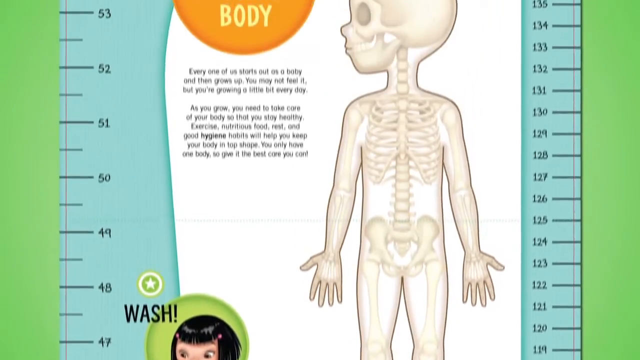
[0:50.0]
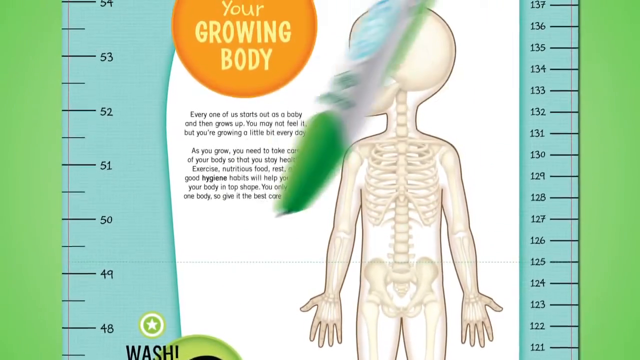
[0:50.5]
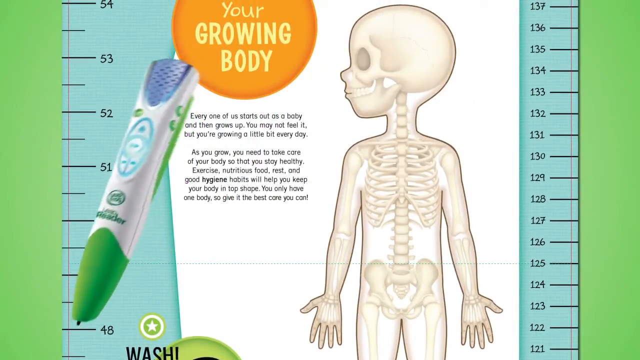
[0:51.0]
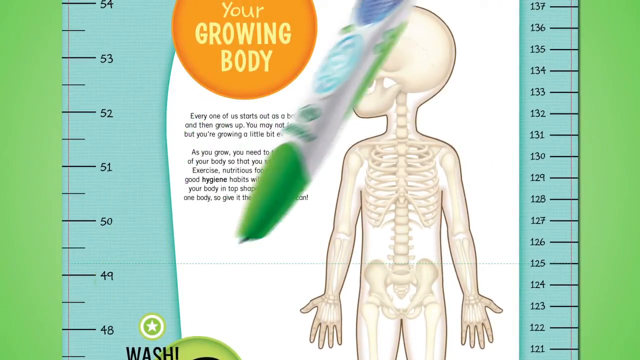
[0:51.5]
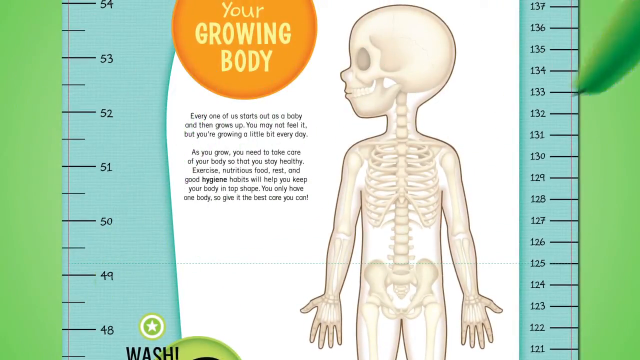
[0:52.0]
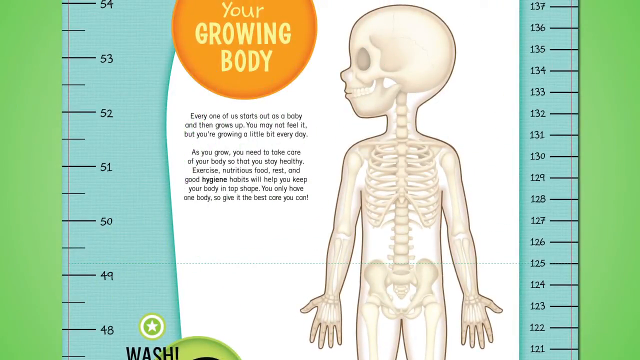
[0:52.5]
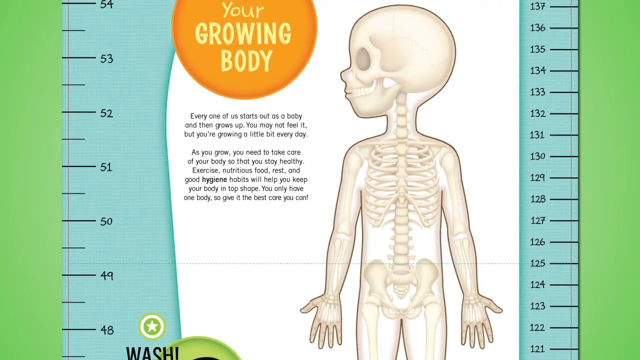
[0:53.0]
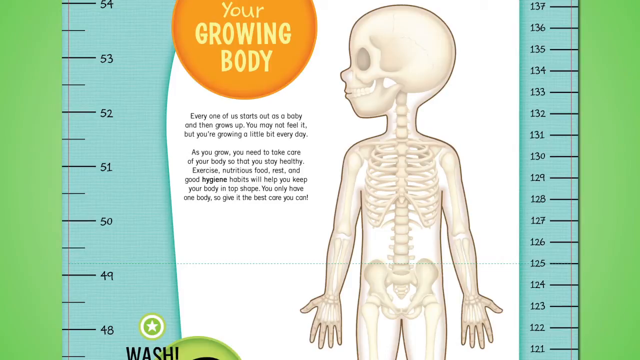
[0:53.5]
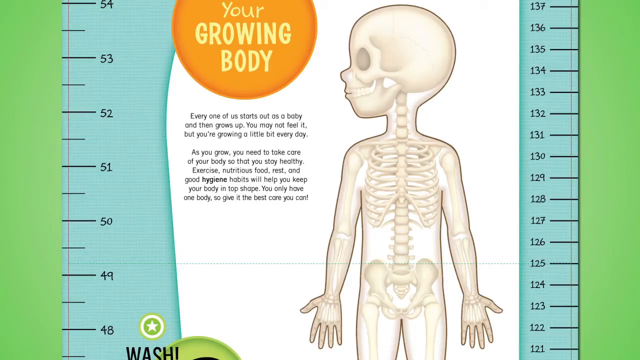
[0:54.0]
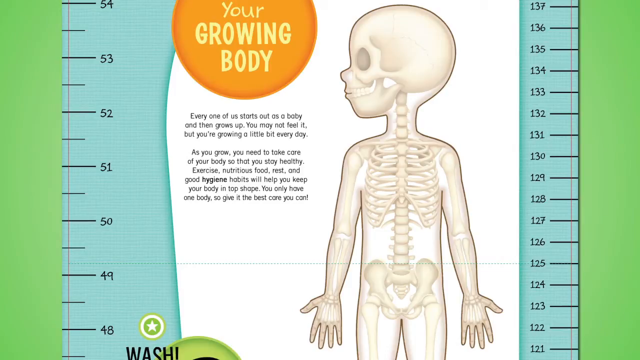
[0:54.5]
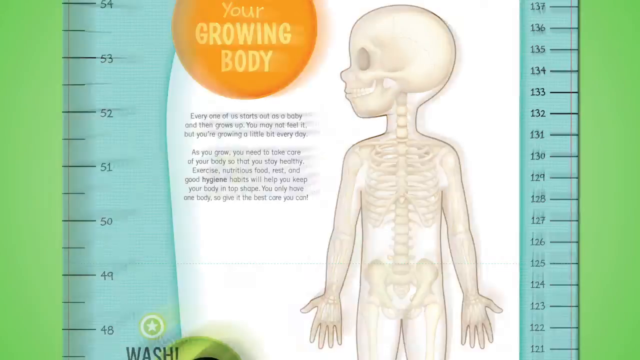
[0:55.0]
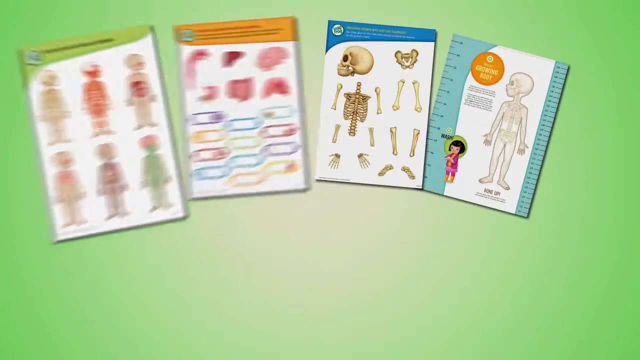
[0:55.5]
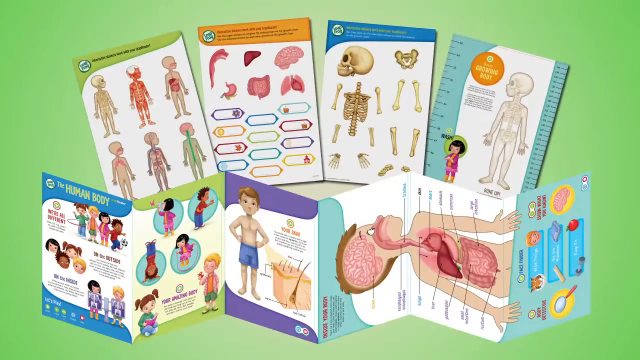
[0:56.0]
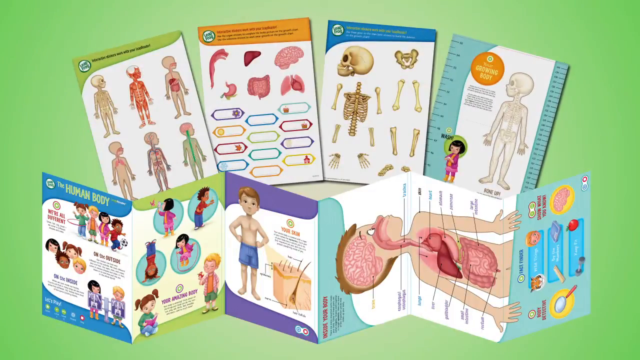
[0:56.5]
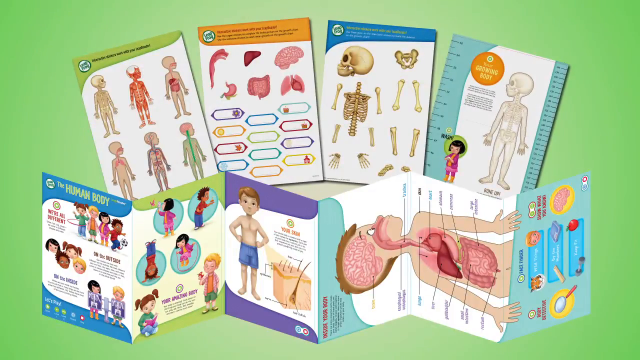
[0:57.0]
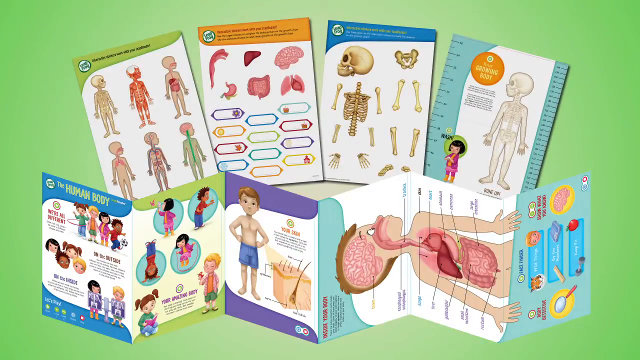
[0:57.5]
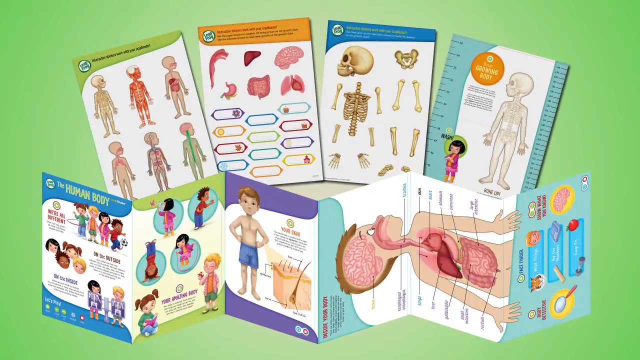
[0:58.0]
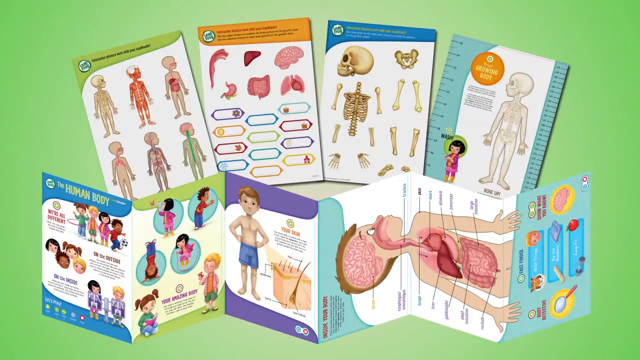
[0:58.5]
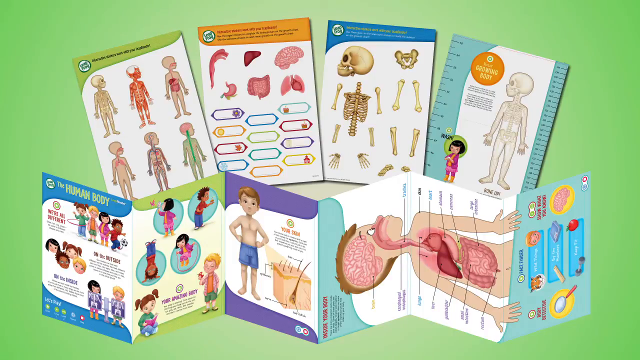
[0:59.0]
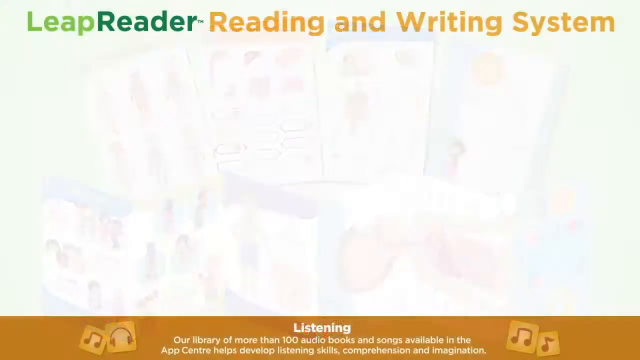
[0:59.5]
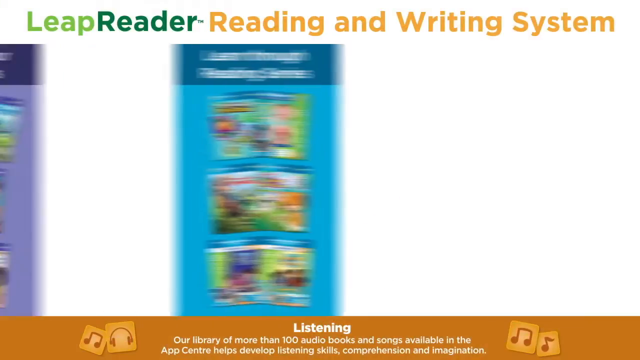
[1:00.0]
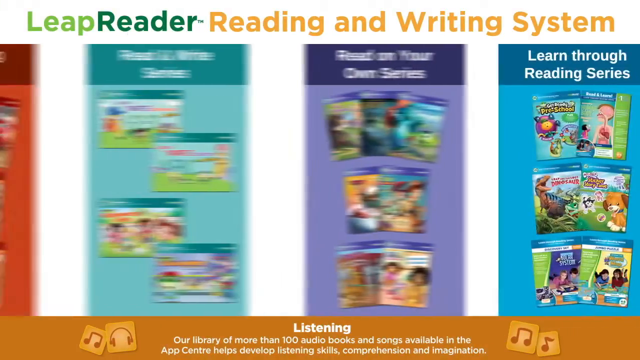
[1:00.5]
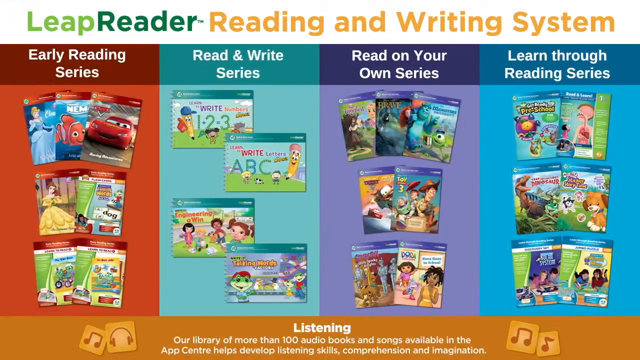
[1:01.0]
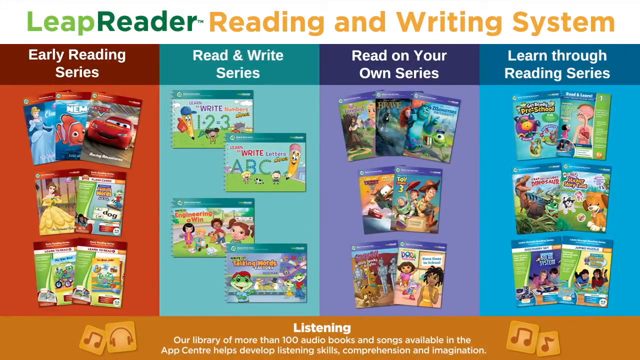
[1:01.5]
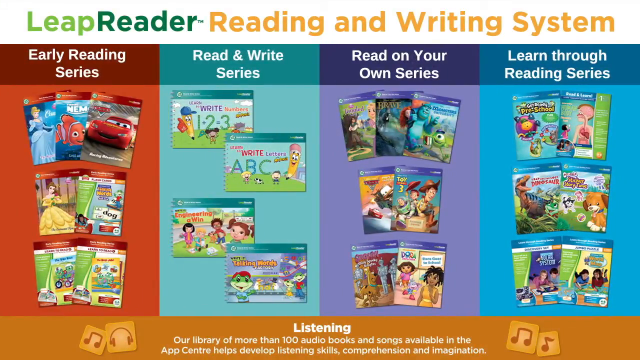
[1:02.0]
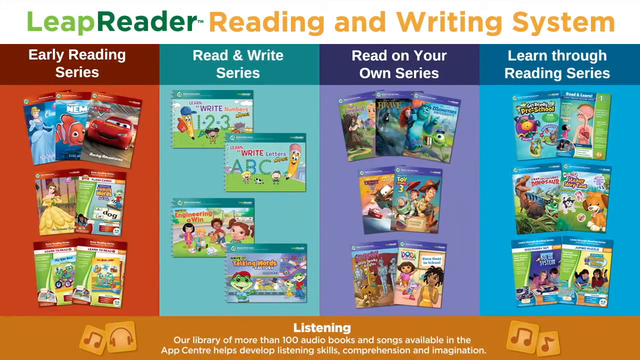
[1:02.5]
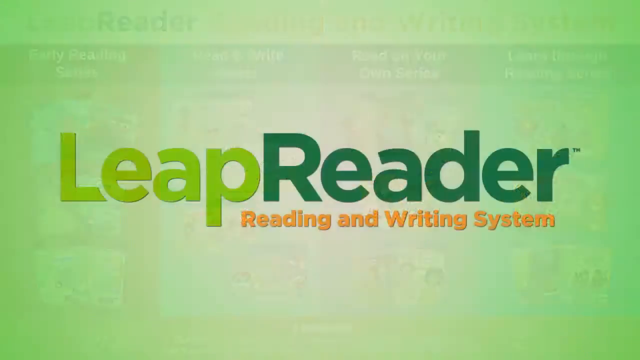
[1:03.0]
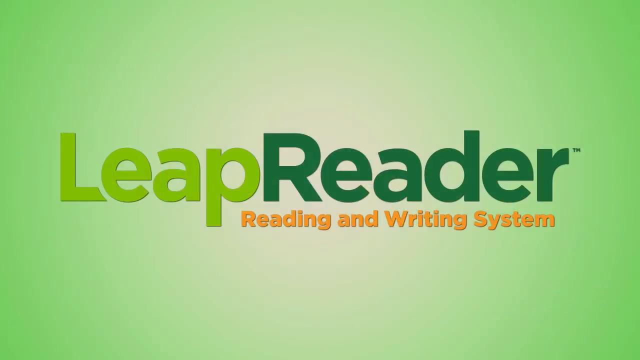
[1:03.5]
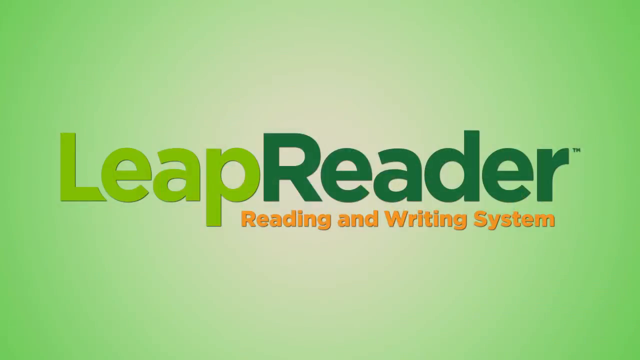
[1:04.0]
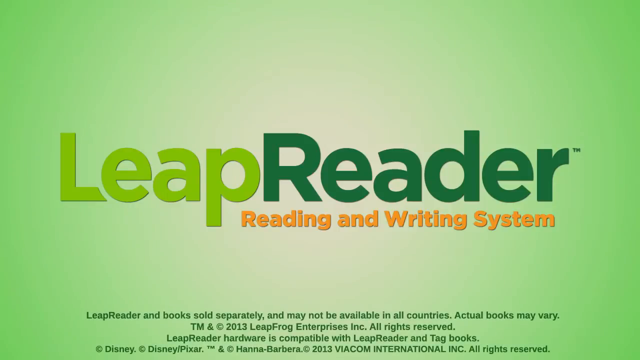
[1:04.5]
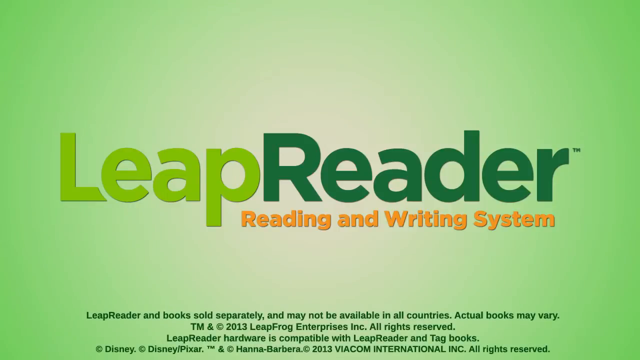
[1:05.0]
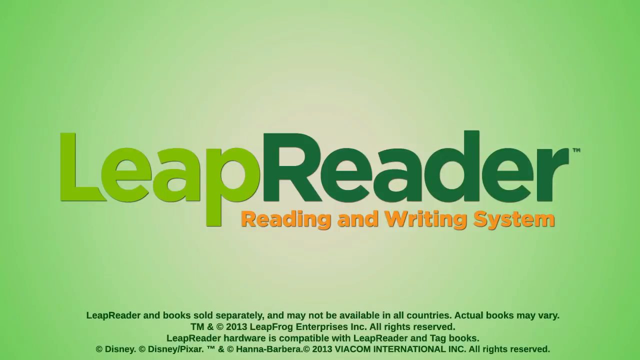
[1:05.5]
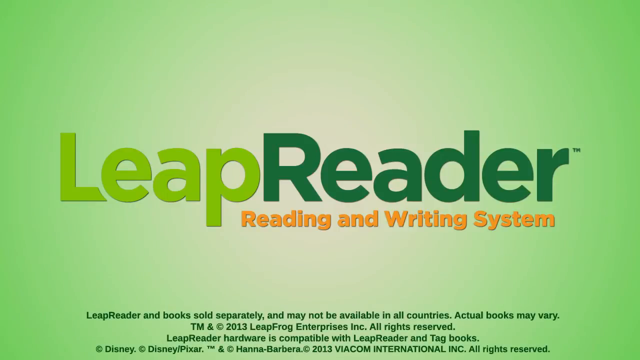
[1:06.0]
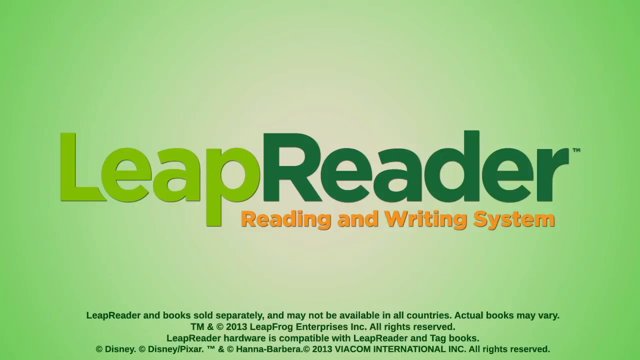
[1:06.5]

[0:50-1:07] "your growing body" is written in yellow inside an orange circle. The next page shows different pages taken from a book, with different shapes of human bodies and different body types, on a light green background. Books are then shown, with "Leap Reader reading and writing system" written at the top of the screen. Many books from different series are shown, including a read and write series, a read on your own series and a learn through series, arranged in four columns: the first with an orange background, the second green, the third purple and the fourth blue. In the words at the top, "LEAP READER" is written in green and "writing system" in yellow.